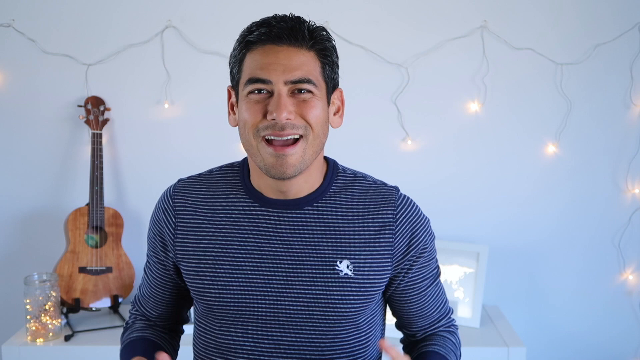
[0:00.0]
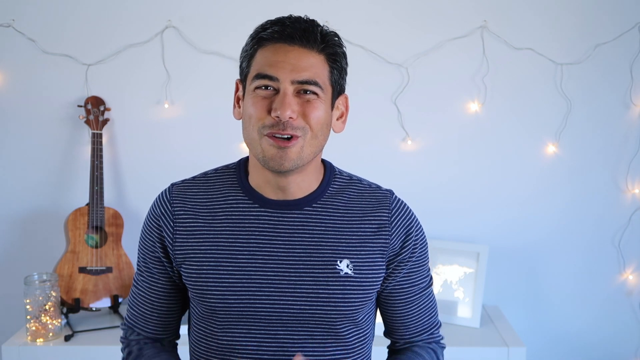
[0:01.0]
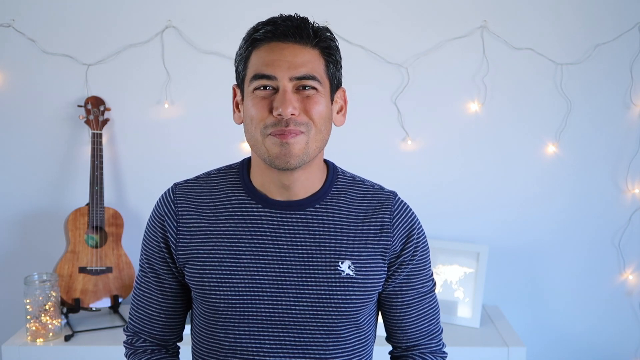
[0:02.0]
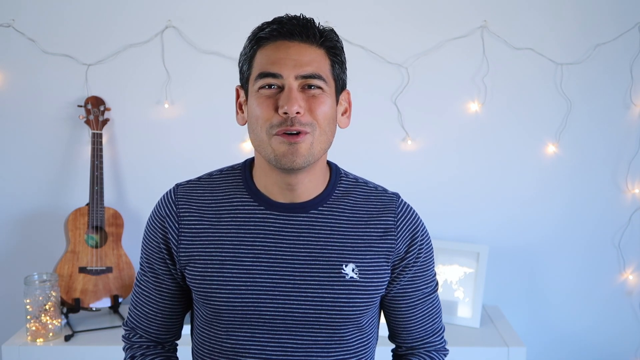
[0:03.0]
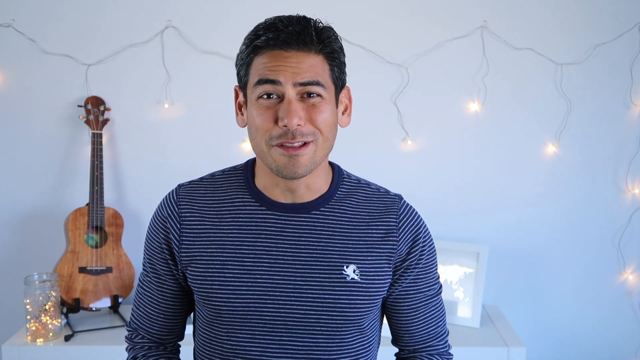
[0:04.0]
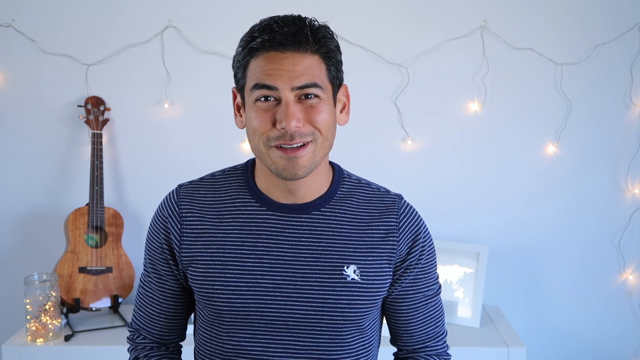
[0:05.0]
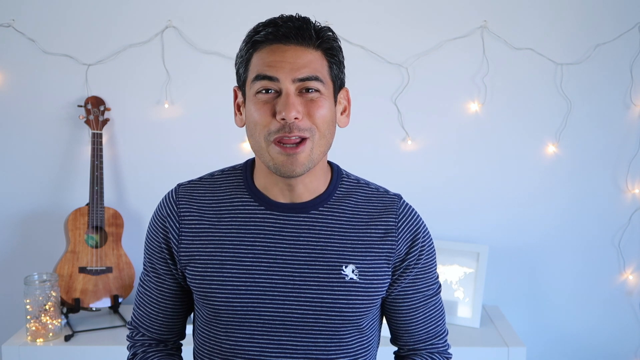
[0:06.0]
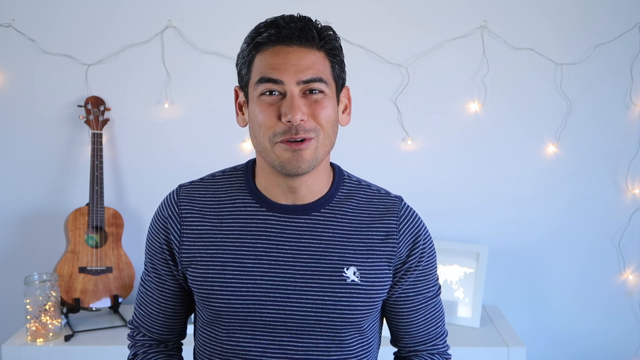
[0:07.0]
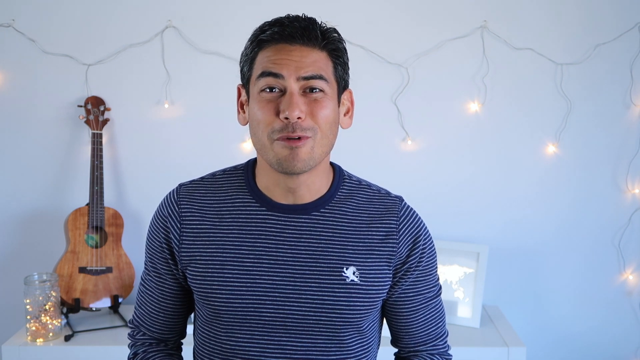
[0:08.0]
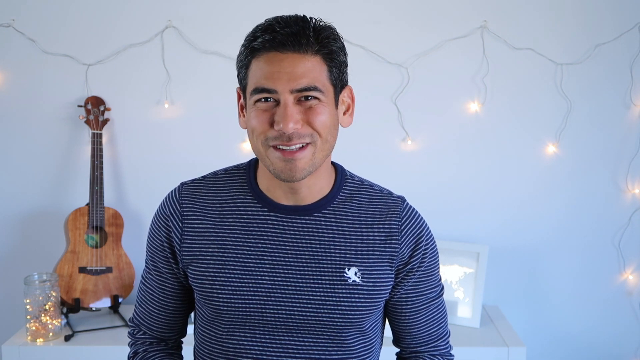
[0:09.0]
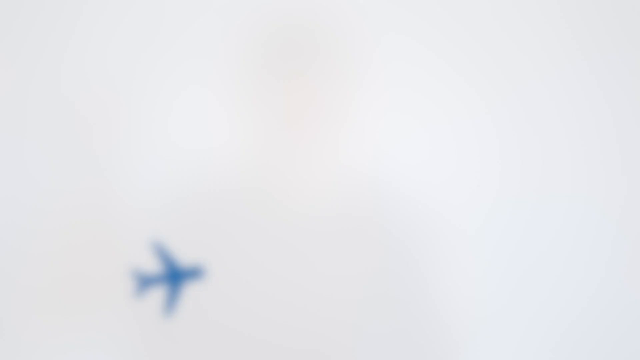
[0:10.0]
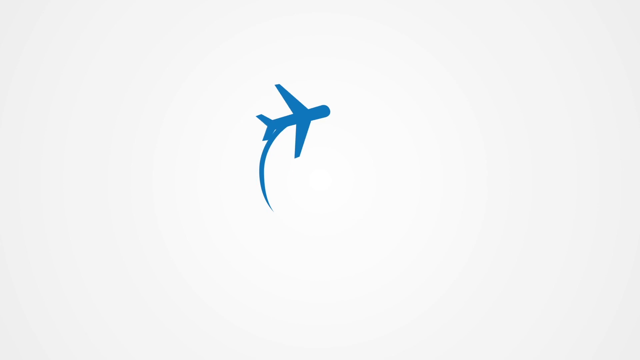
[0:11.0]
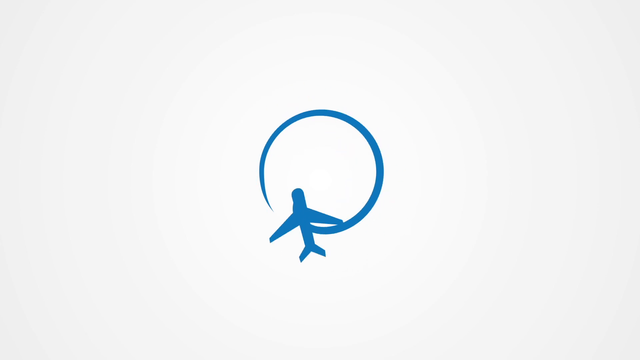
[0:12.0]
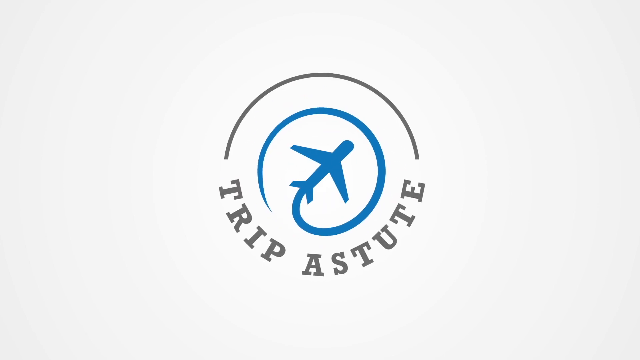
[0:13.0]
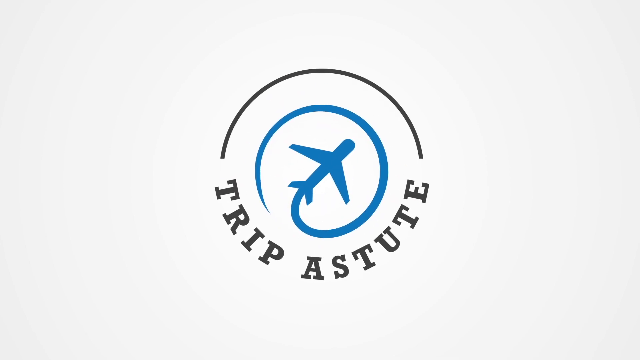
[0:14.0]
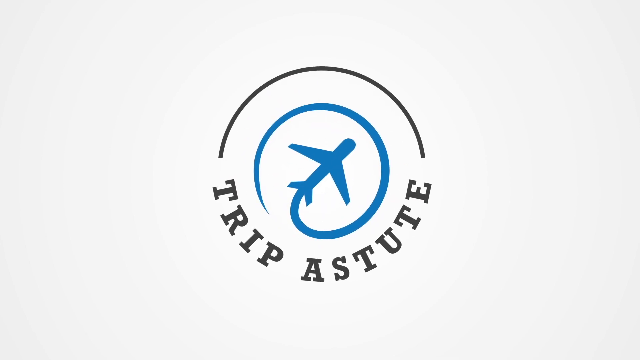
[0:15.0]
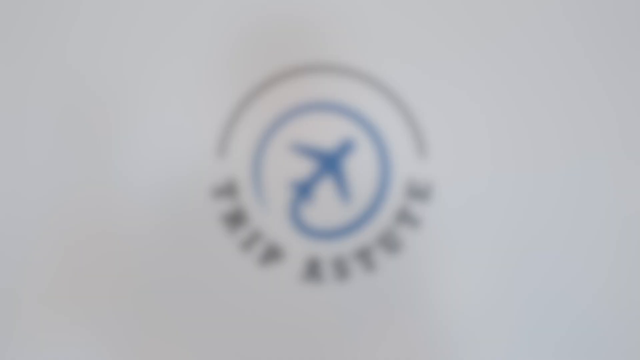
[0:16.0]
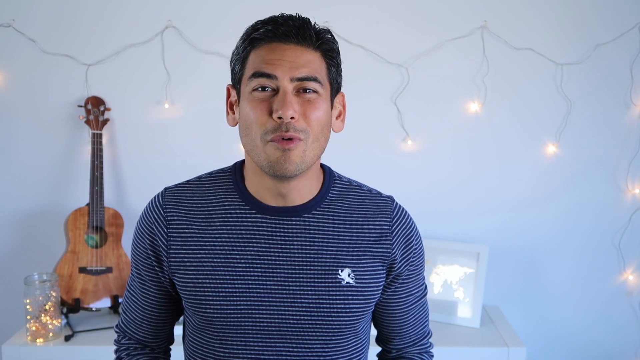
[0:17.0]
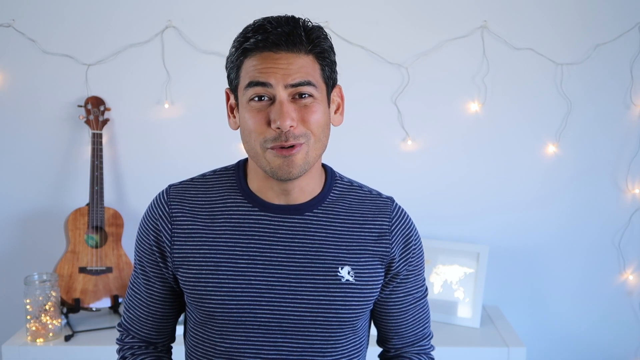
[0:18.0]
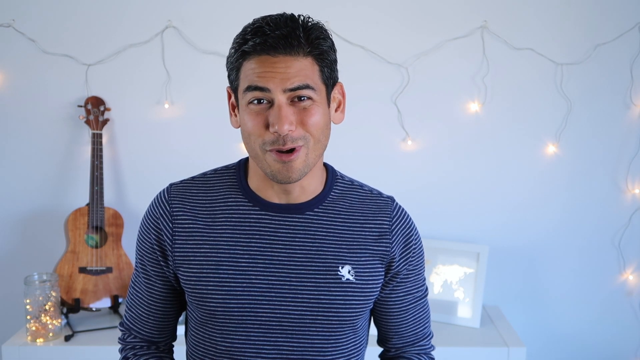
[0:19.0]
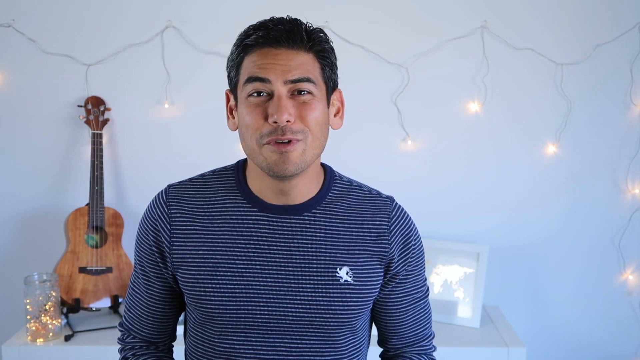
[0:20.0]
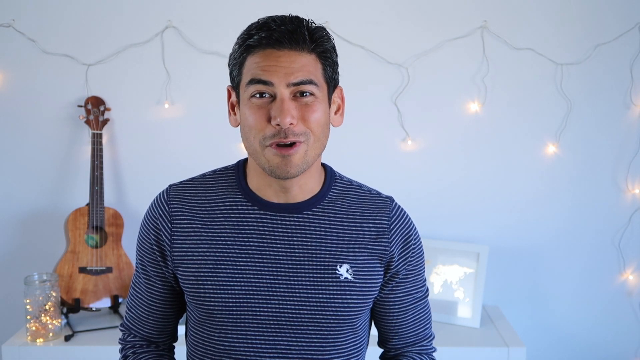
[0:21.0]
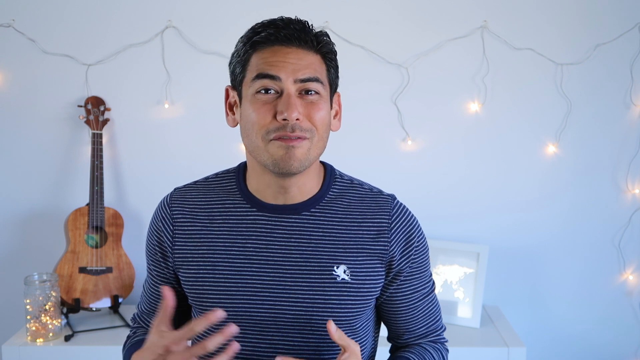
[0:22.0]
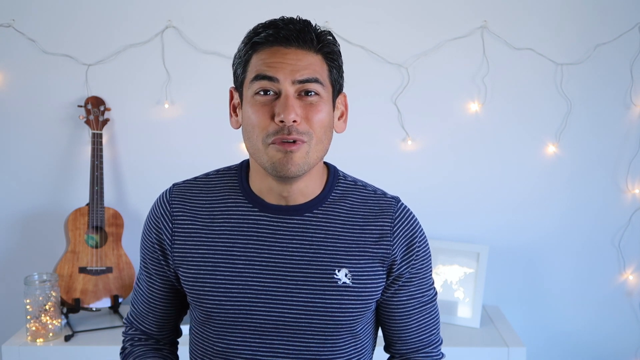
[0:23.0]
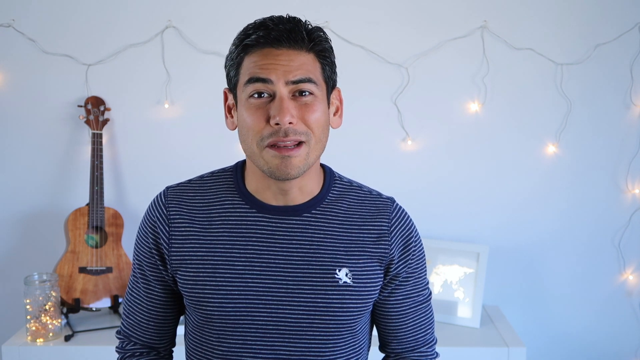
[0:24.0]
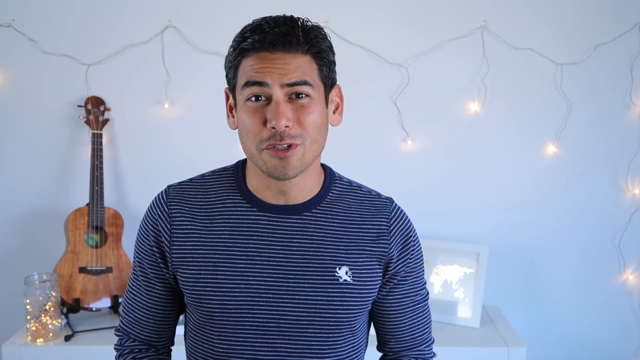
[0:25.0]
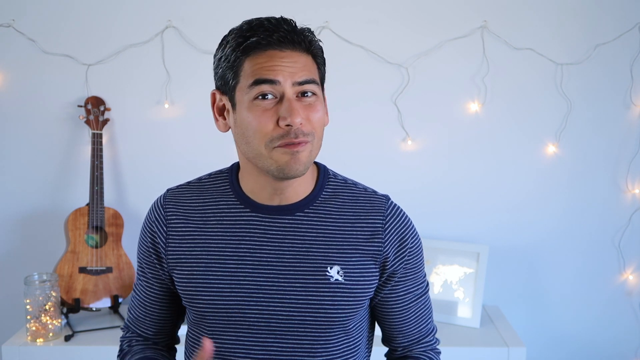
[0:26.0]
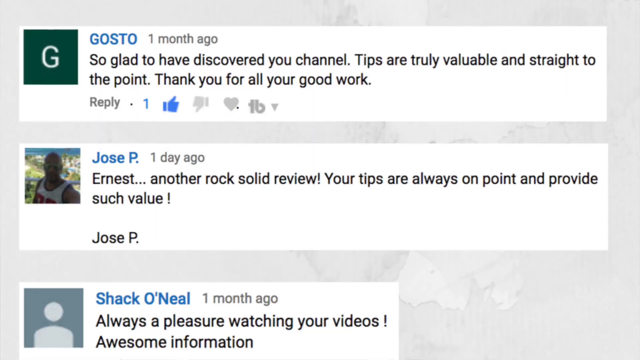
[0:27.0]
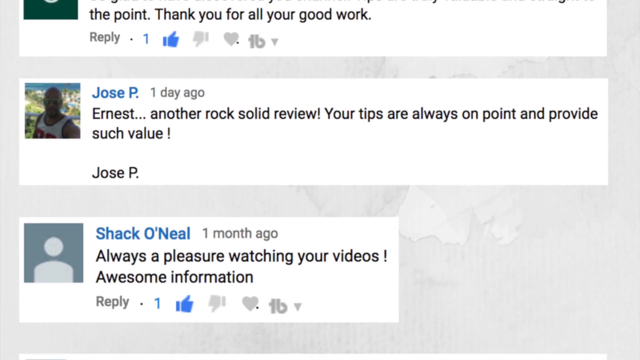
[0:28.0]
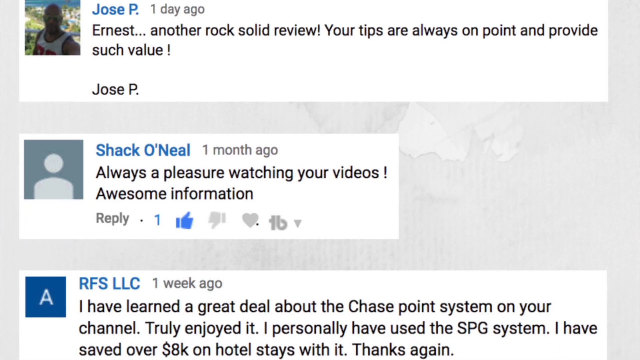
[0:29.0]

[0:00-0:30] A young man speaks to the camera in what looks like a bedroom or a room of his own home. He wears a striped navy and white top, has black hair with a few tinges of grey starting to appear, and is mostly sort of smiling at the camera as he speaks. Lights strung up a bit like Christmas lights hang against a white background, and an acoustic guitar is propped up in the left-hand corner. The footage switches to a small blue animation of a commercial airline plane sort of flying in random directions; it eventually traces out a circle and enters it, and a grey circle appears around it with the text "trip astute". The circle darkens from light grey to dark grey and enlarges slightly. The footage returns to the same man in the room, still talking to the camera, and then switches to social media, where various comments from different people who have posted replies appear and the view quickly zooms down them.